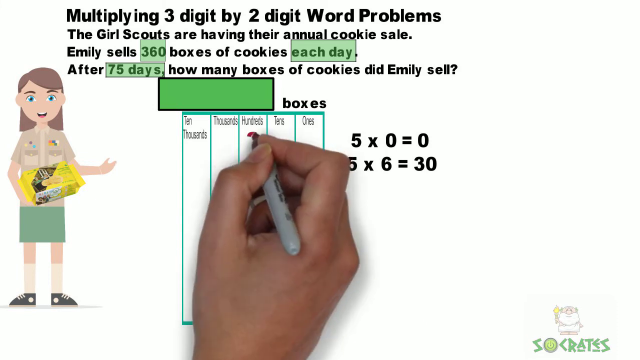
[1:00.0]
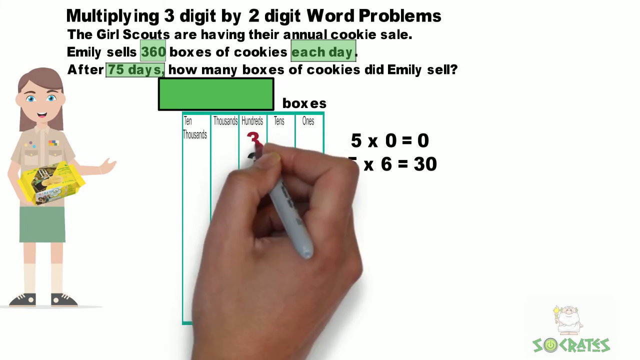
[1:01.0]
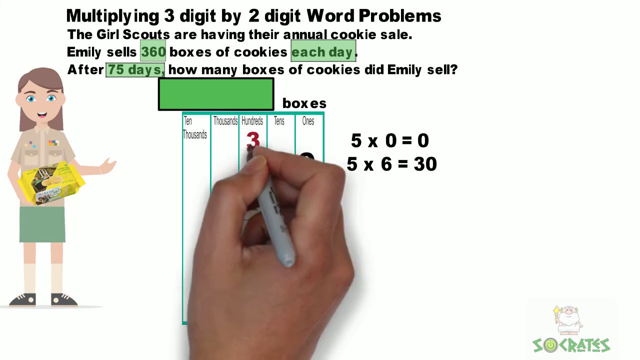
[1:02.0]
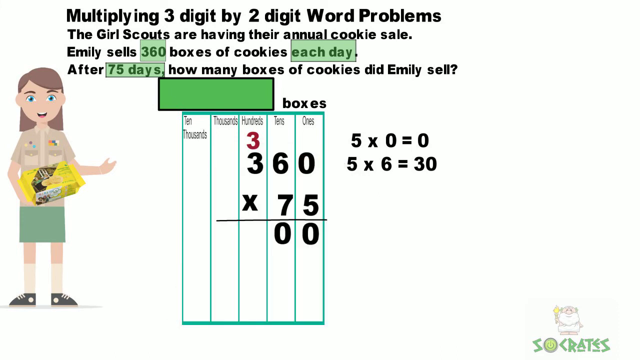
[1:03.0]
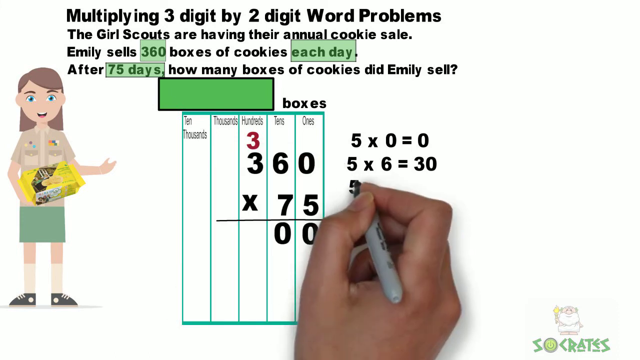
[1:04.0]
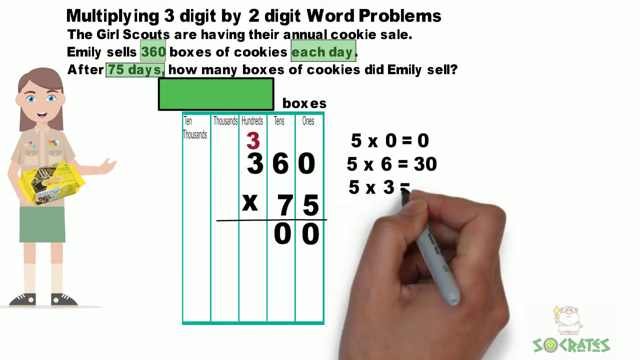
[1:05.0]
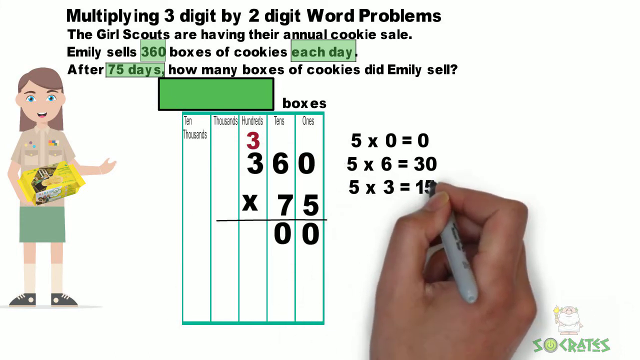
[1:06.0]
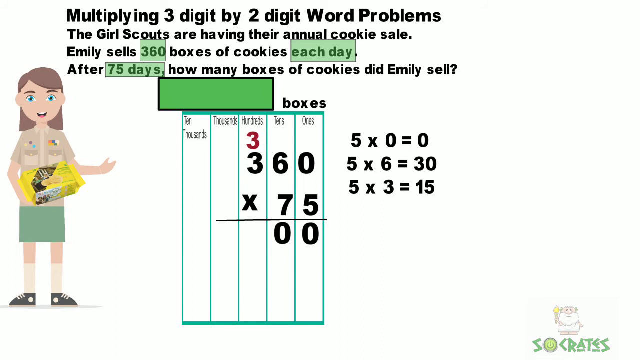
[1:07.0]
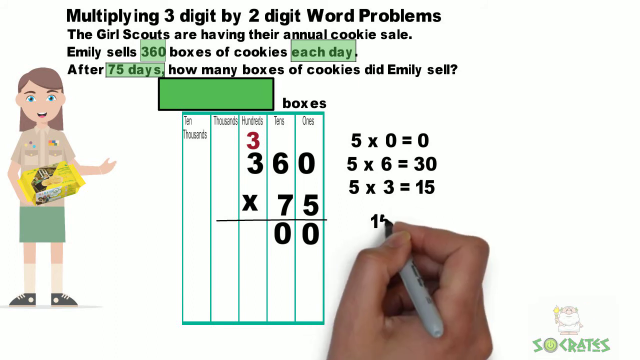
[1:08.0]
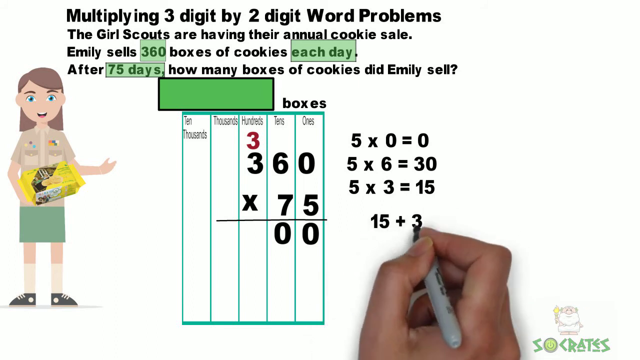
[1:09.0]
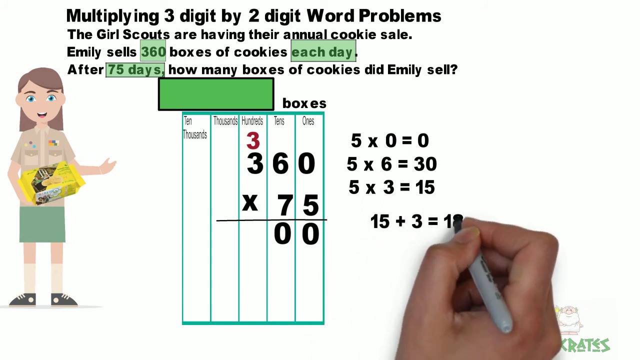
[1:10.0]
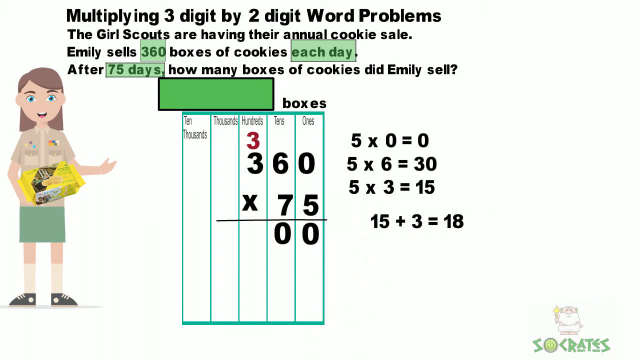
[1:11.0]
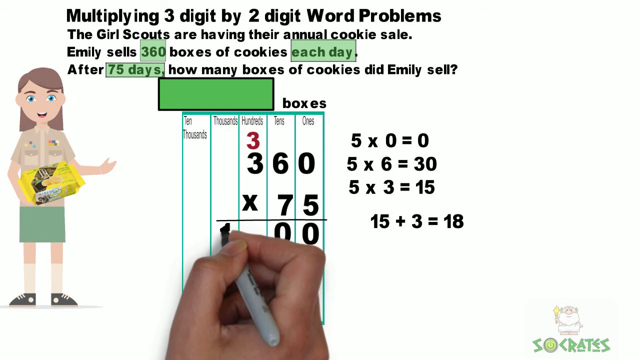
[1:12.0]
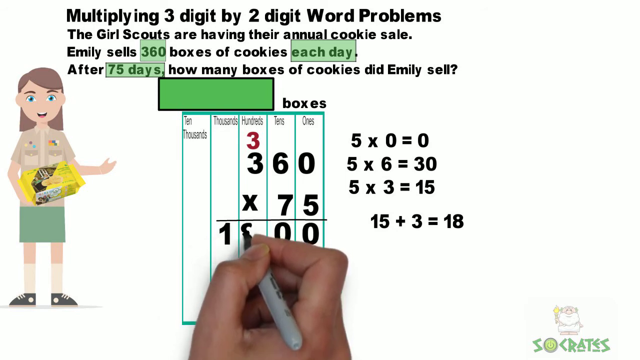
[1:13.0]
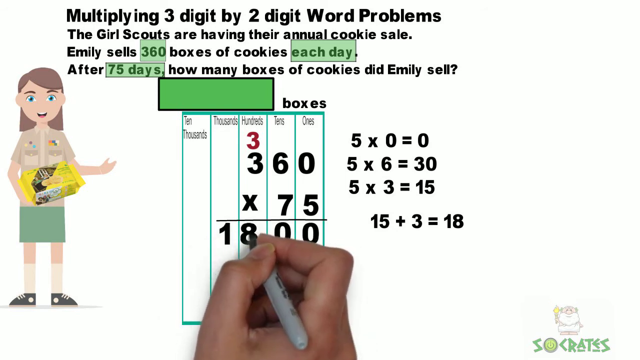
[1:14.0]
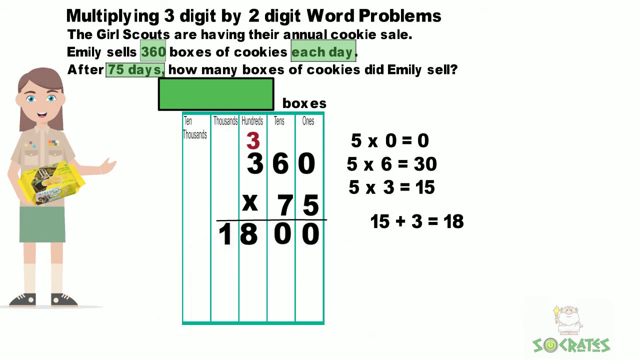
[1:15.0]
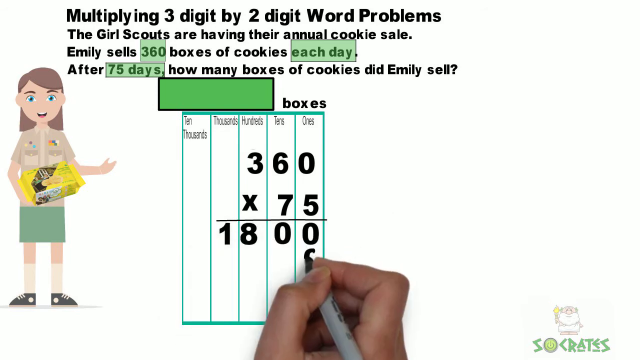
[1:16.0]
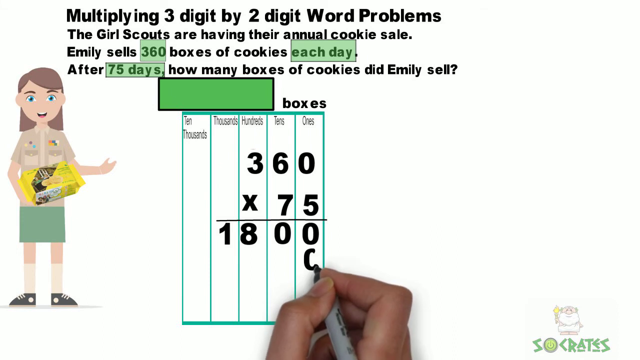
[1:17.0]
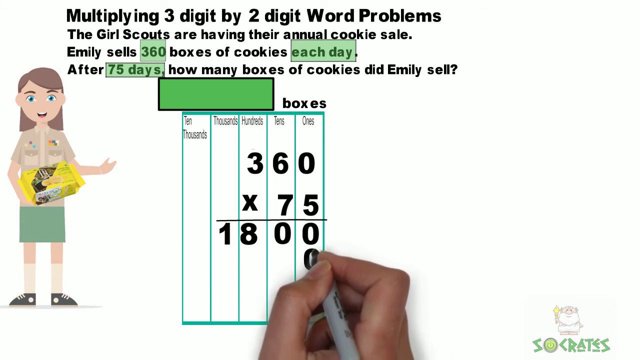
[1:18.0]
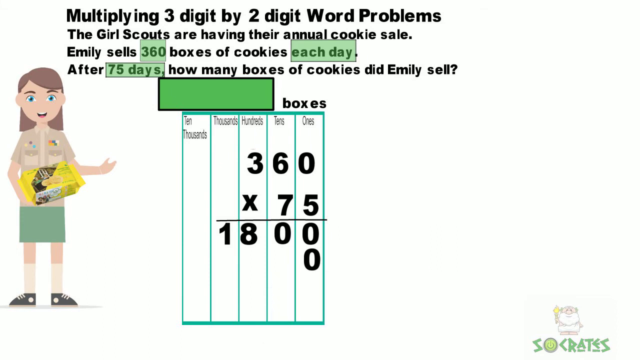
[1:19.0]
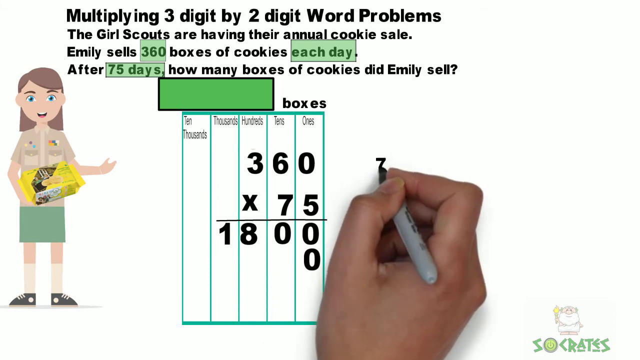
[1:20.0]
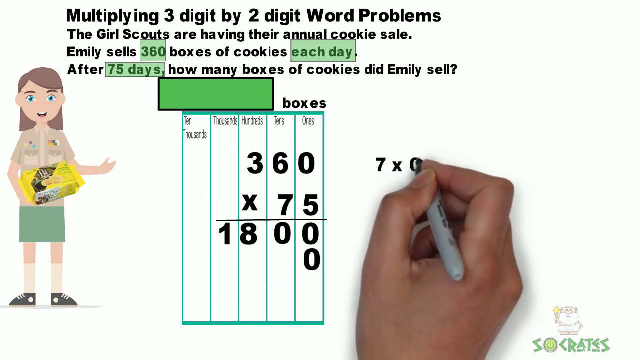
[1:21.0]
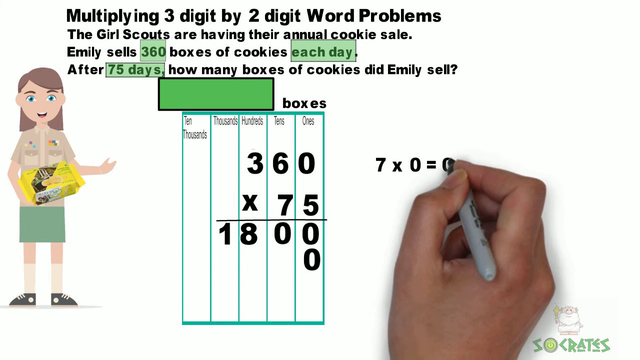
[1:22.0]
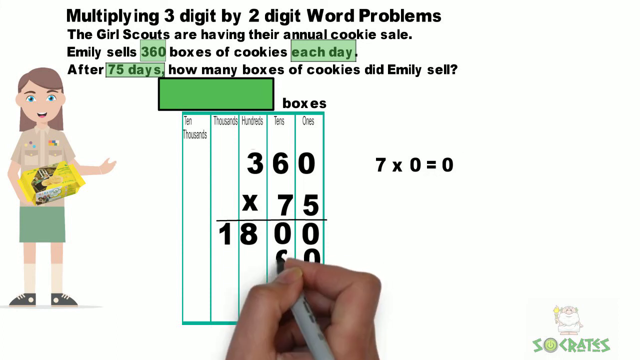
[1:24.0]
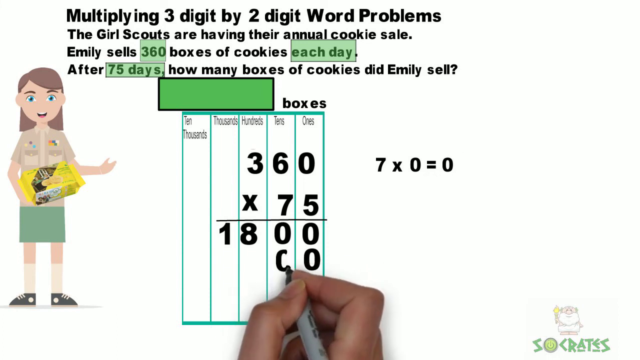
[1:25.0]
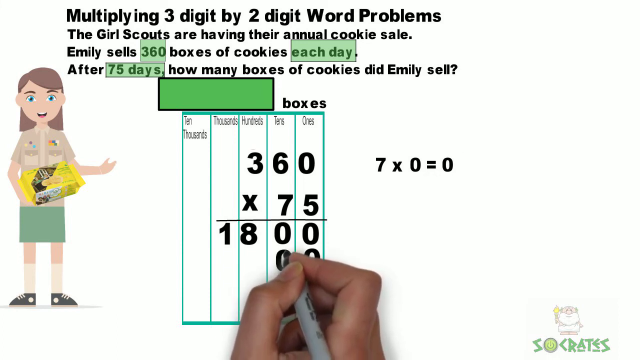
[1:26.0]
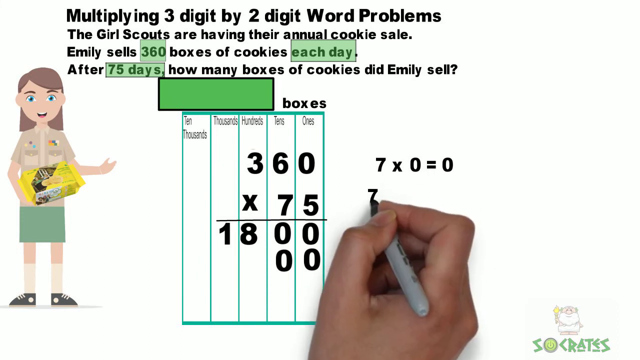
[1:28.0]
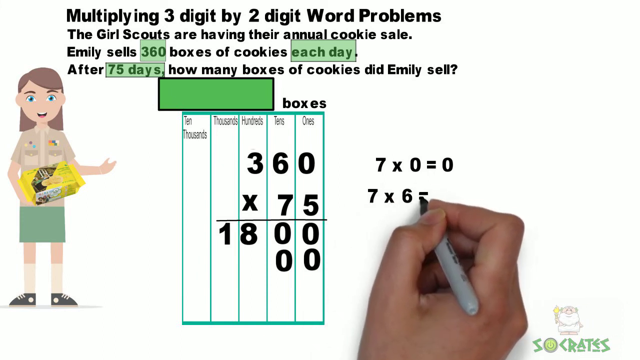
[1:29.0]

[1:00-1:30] A slide with black text is shown, with a hand initially holding a Sharpie. On the left is a clip-art style cartoon image of a Girl Scout with light brown hair, wearing the traditional uniform with a light brown top bearing some colorful pins, a green skirt, knee-high socks and black shoes. She holds a yellow box of what could be cookies. Beneath the word problem is a table in which the hand works through the multiplication step by step. The table shows 360 times 75, with a 0 and a 0 written underneath so far and an underline separating them. On the right-hand side of the table are "5 times 0 equals 0", "5 times 6 equals 30" and "5 times 3 equals 15". The hand then writes "15 plus 3 equals 18", and a 1 and an 8 are added to the table, making 1,800. A 0 is then written under the final zero, and "7 times 0" is written to the right. Another 0 is written, "7 times 6" is shown, and 42 is written after it, all on the right-hand side of the table.